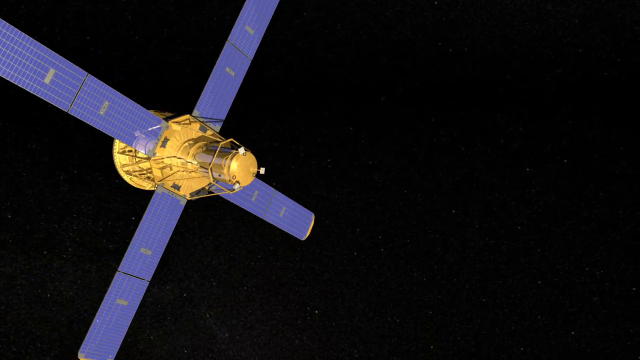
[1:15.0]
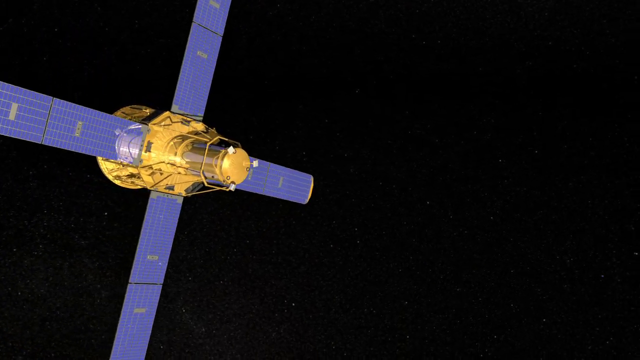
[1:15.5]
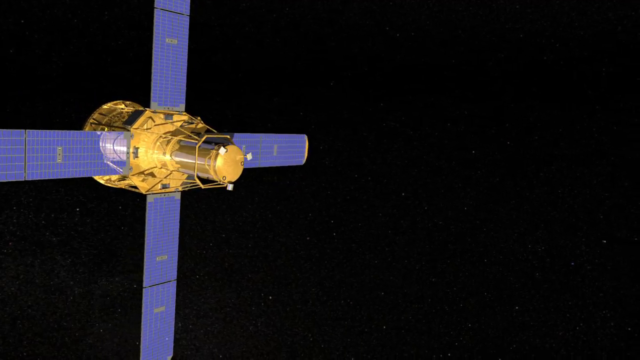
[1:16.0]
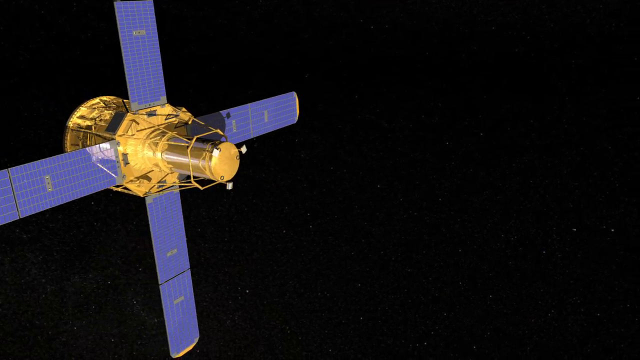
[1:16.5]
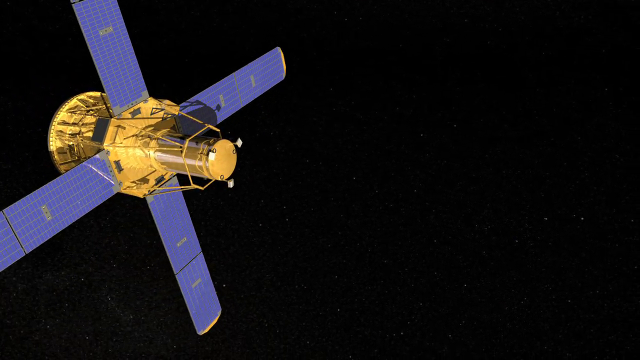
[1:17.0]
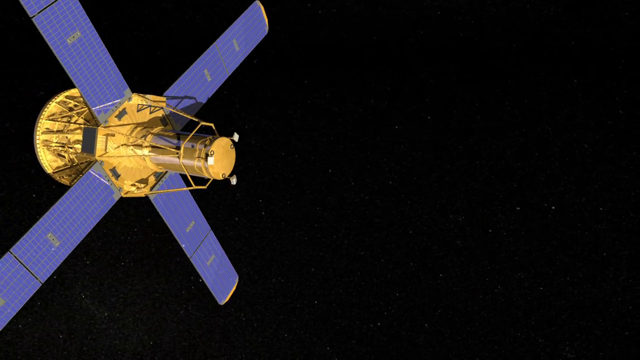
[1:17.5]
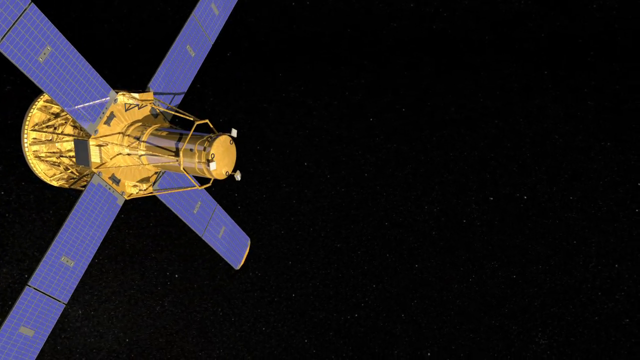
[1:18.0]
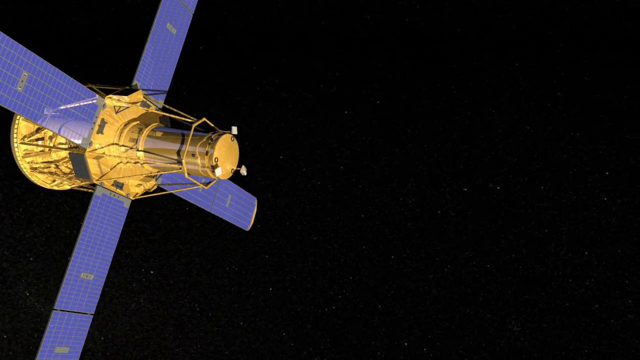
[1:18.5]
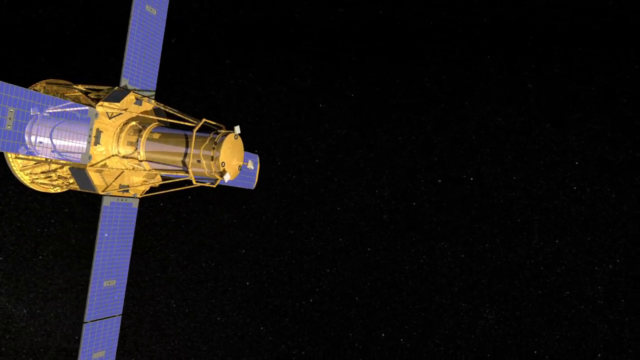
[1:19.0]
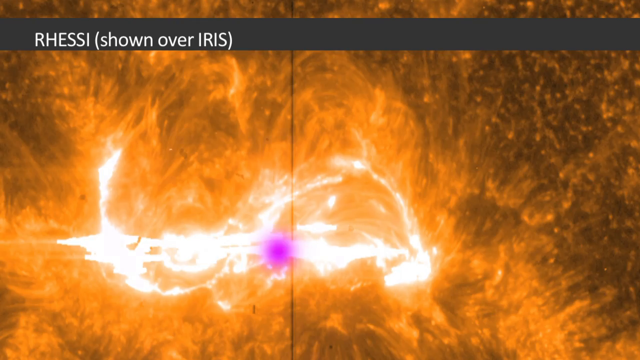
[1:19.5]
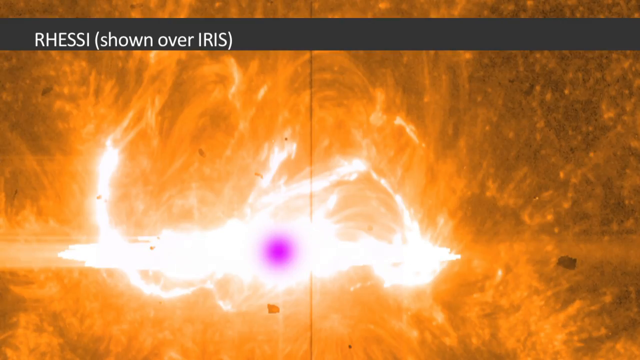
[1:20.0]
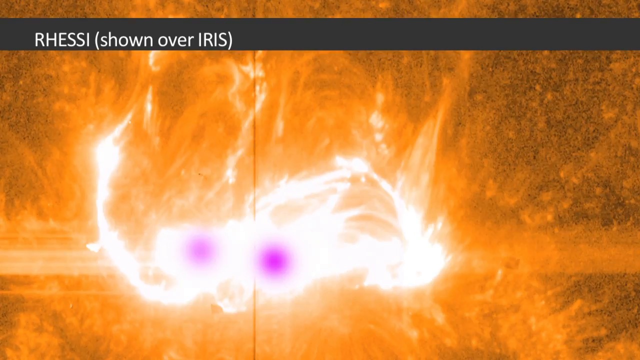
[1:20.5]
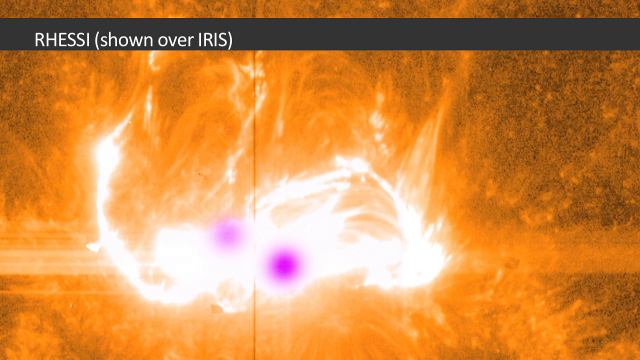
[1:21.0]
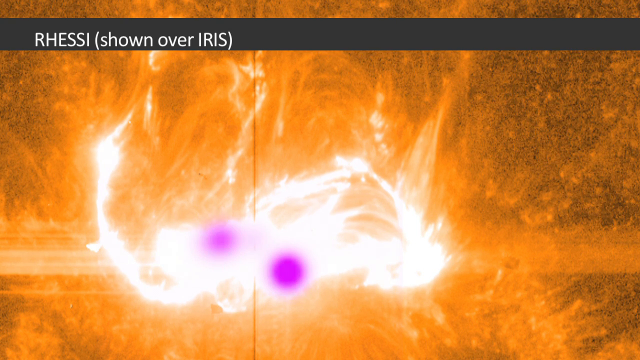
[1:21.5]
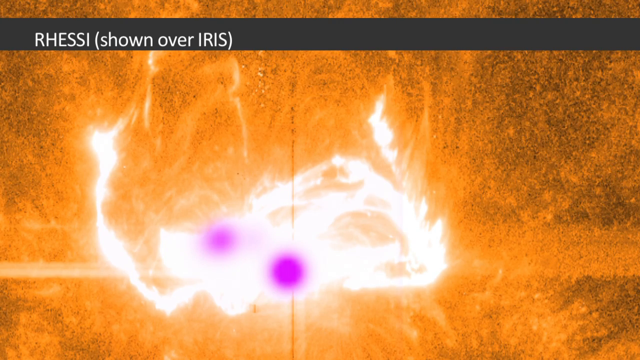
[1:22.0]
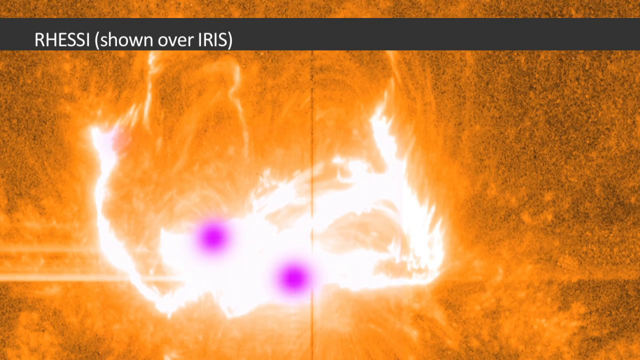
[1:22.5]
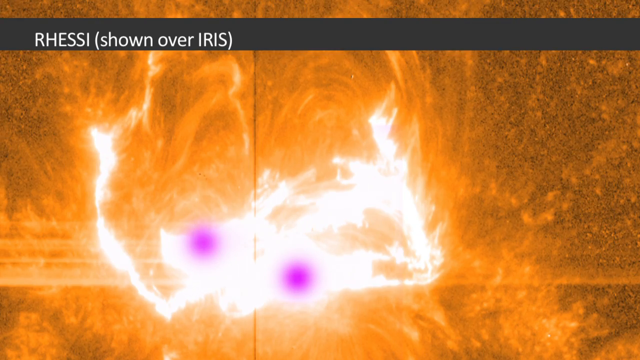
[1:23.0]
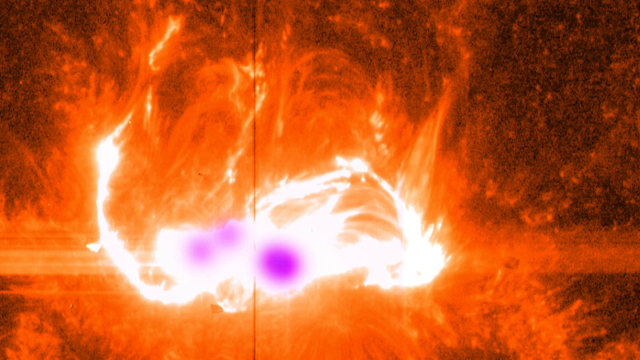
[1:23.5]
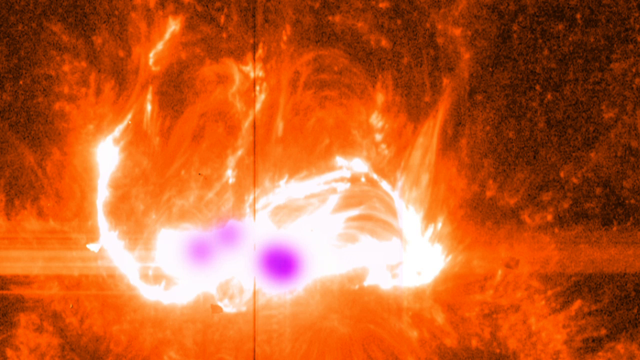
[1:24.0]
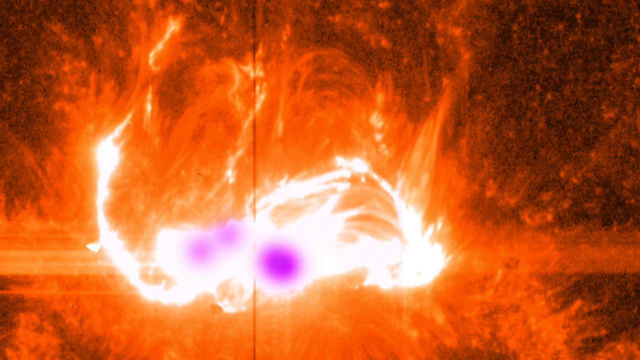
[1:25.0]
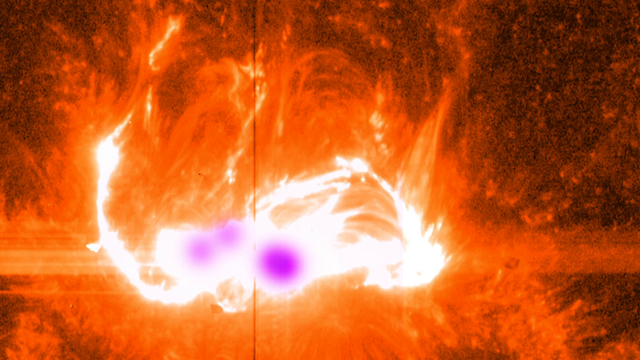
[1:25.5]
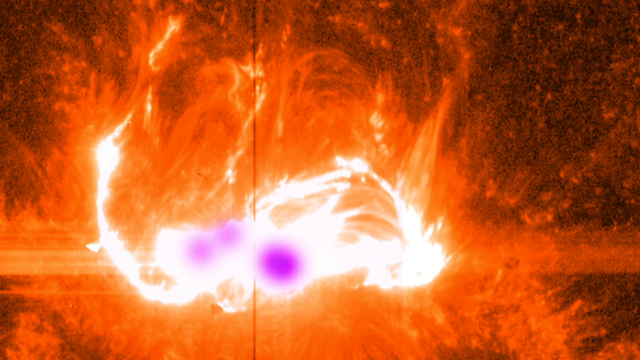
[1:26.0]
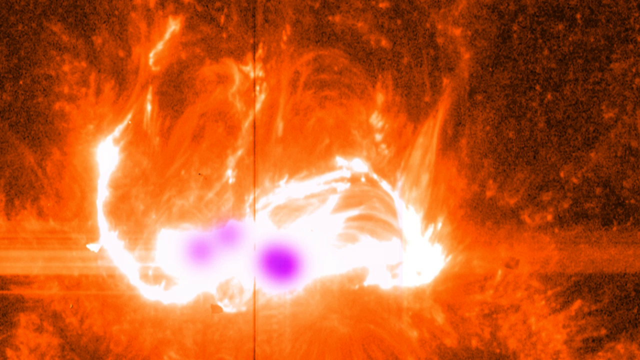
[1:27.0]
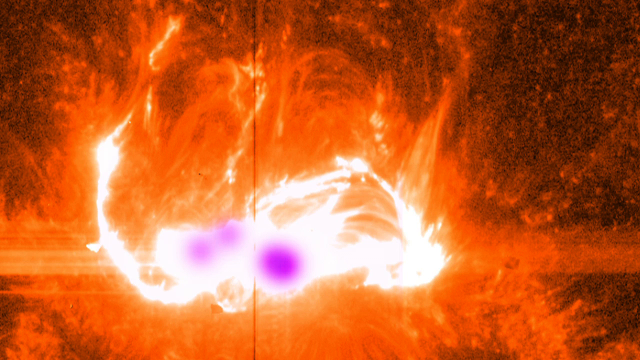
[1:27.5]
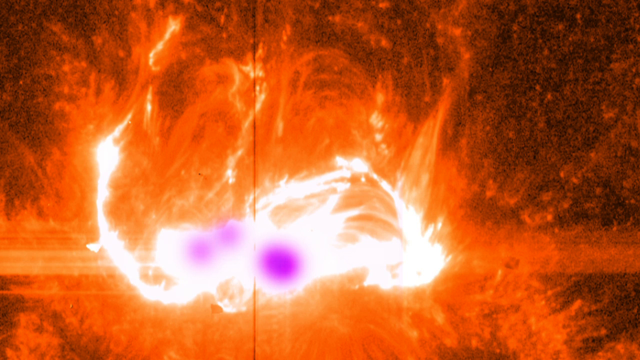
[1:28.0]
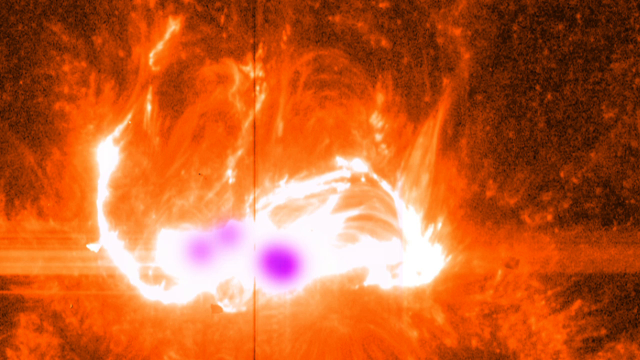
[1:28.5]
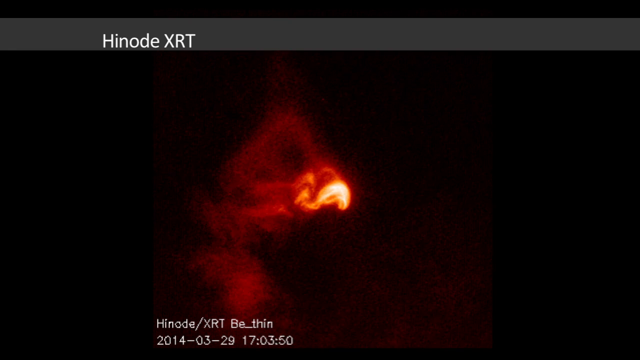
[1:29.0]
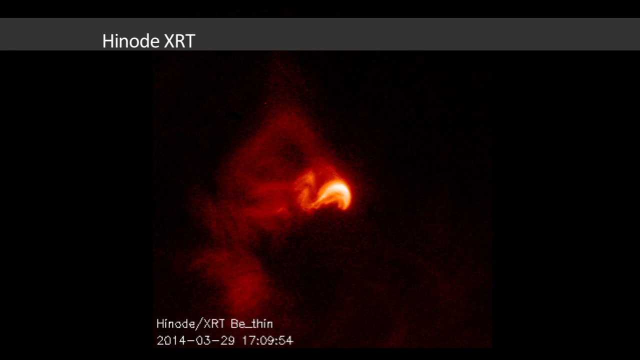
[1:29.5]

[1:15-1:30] A computer-generated satellite with four thin blue wings and a gold center rotates slowly in the sky. Then a shot of a solar flare shows a bright orange Sun with a white solar flare and a couple of purple spots in the middle of the flare that kind of float around. The Sun turns dark orange and the image pauses. Another shot of a flare follows, in which the Sun looks dark red and is hard to see because of the darkness around it. There is a yellow or orangeish flare in the center that flashes white for a moment. The image is grainy and a little hard to make out. There is white text at the bottom, with what looks like a timer or maybe a date or a location in the bottom left corner. The background is completely black with no stars visible. A gray strip at the top of the screen holds more white text, which might be identification information. The image flickers.